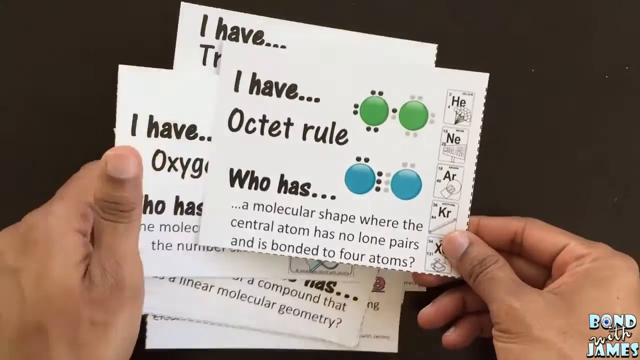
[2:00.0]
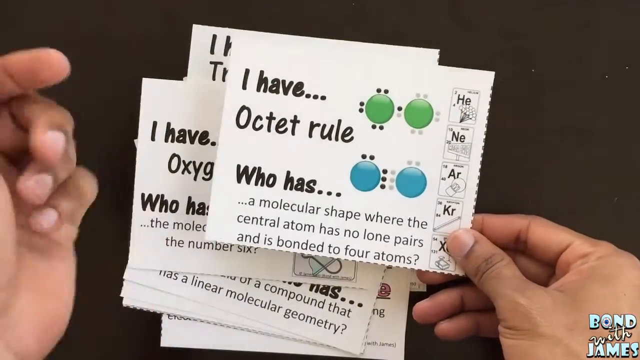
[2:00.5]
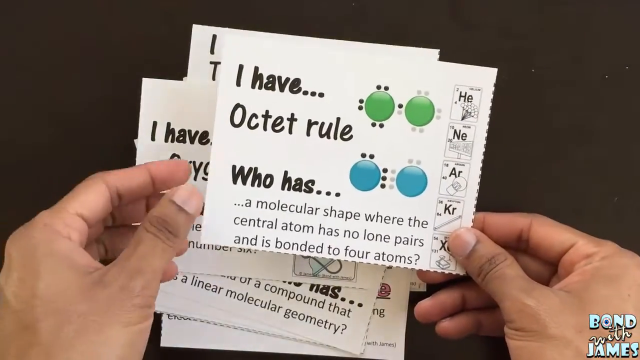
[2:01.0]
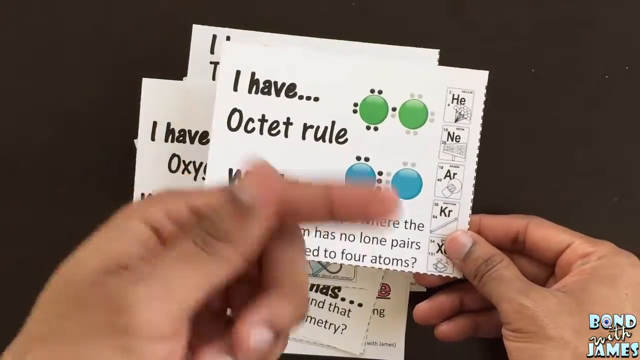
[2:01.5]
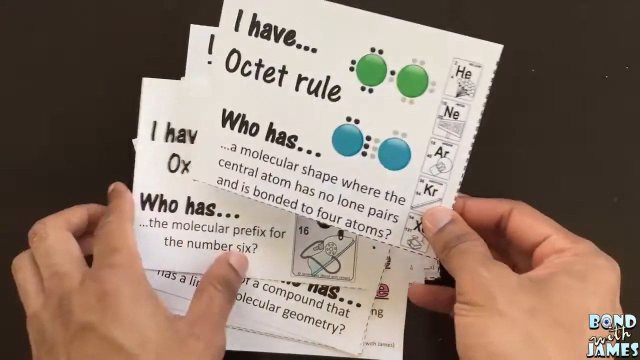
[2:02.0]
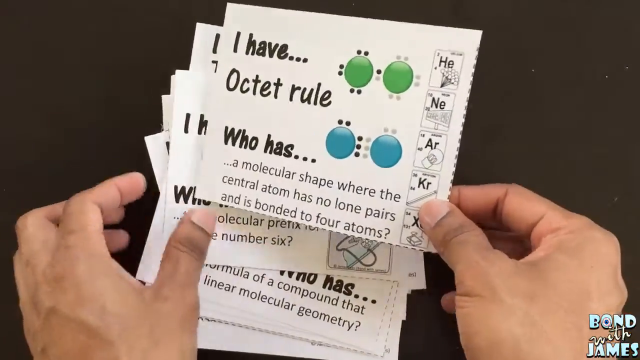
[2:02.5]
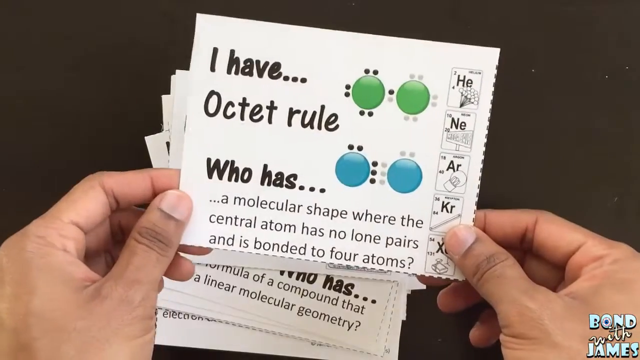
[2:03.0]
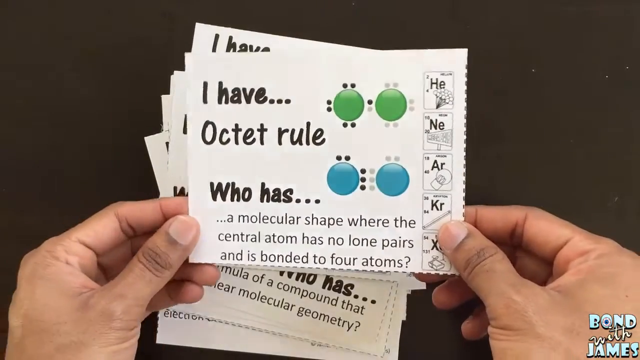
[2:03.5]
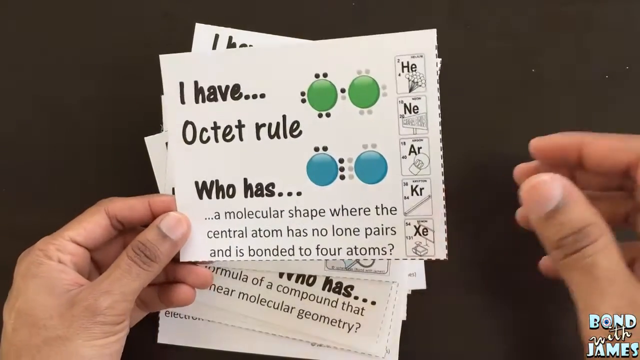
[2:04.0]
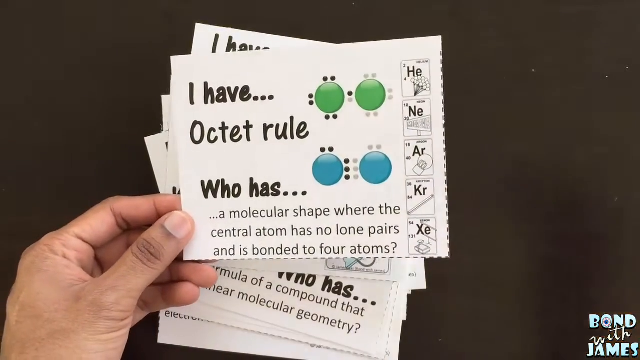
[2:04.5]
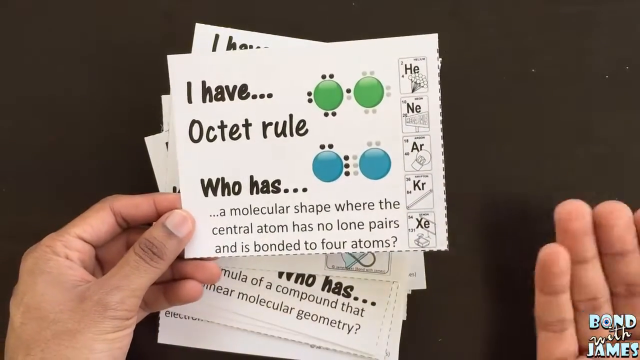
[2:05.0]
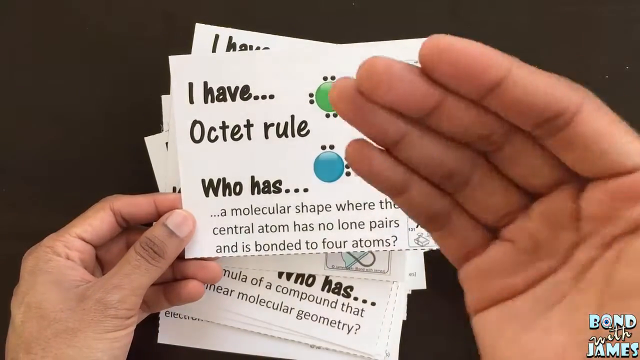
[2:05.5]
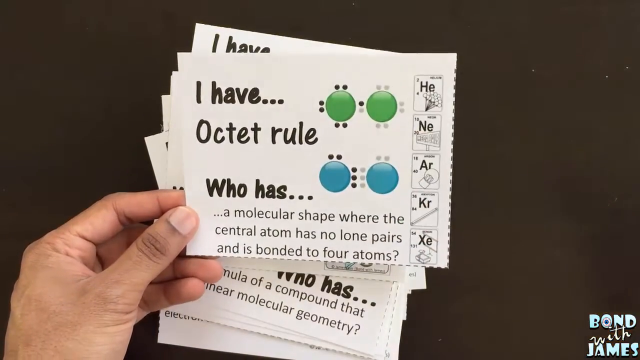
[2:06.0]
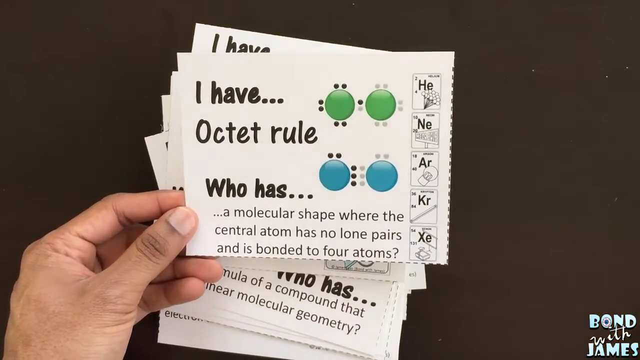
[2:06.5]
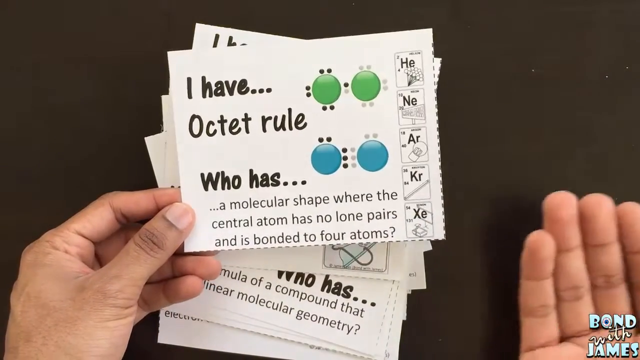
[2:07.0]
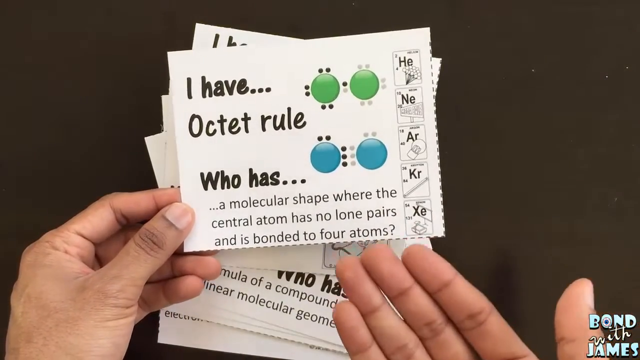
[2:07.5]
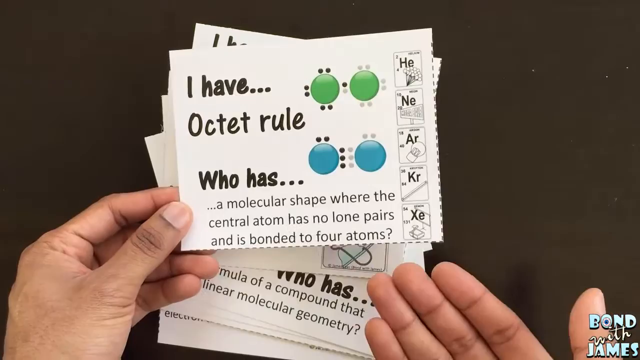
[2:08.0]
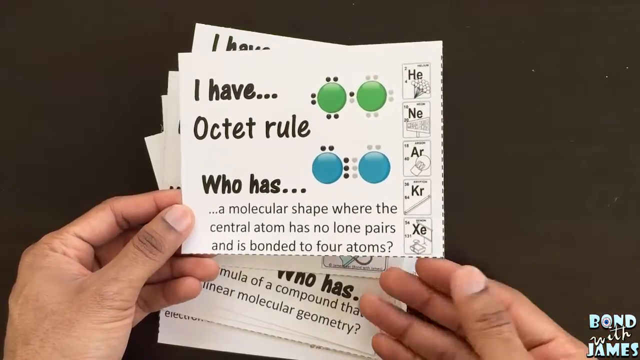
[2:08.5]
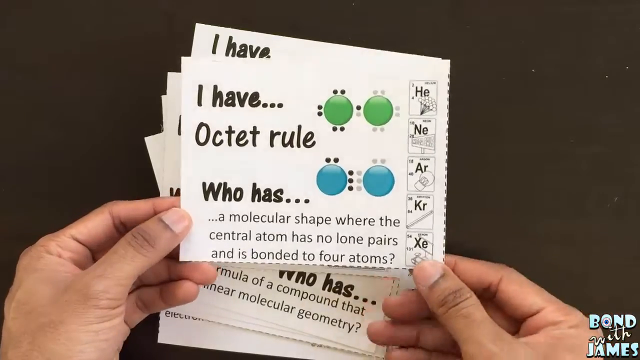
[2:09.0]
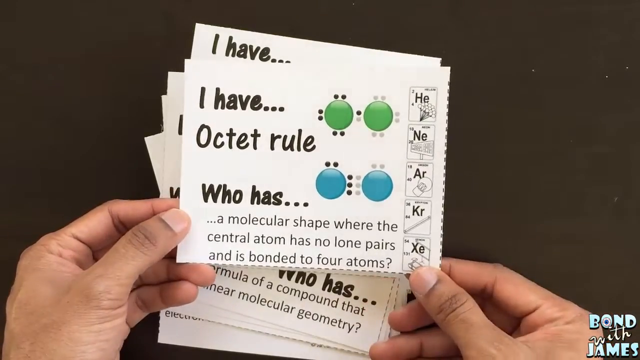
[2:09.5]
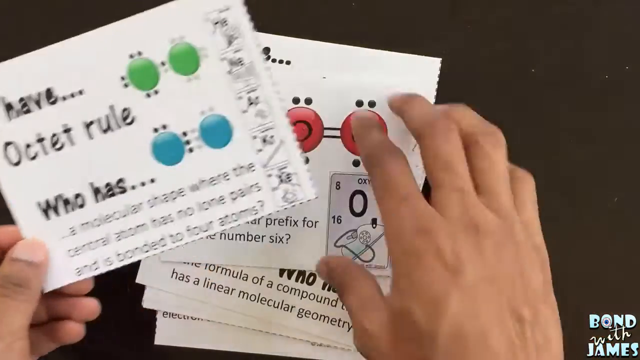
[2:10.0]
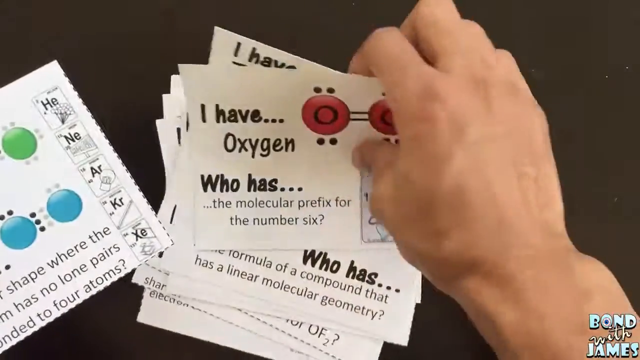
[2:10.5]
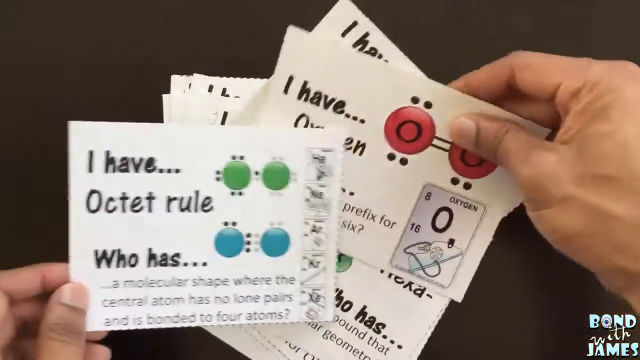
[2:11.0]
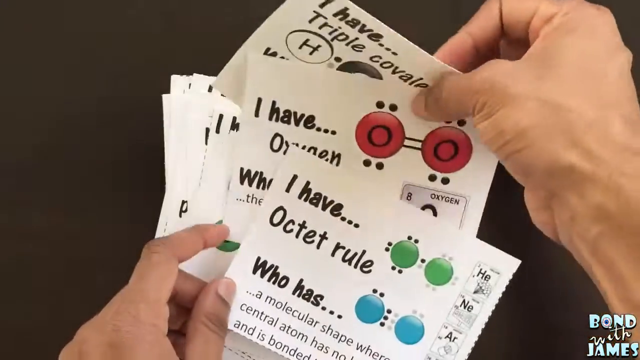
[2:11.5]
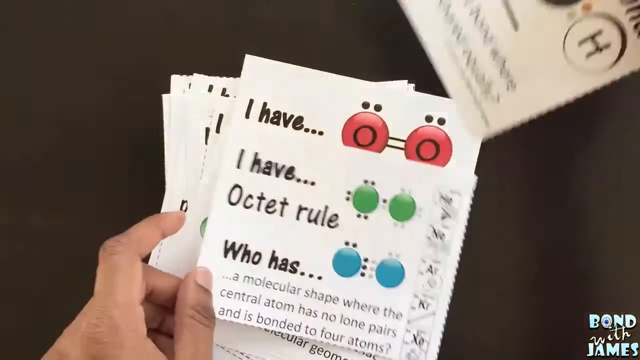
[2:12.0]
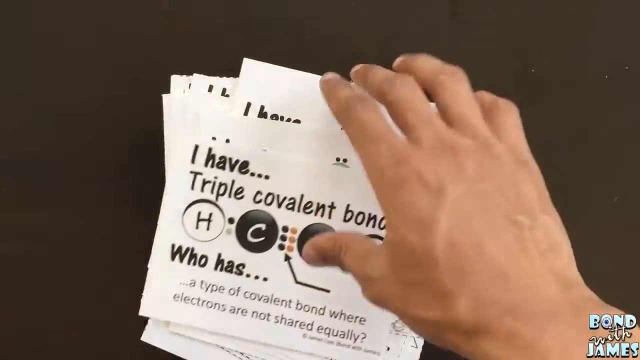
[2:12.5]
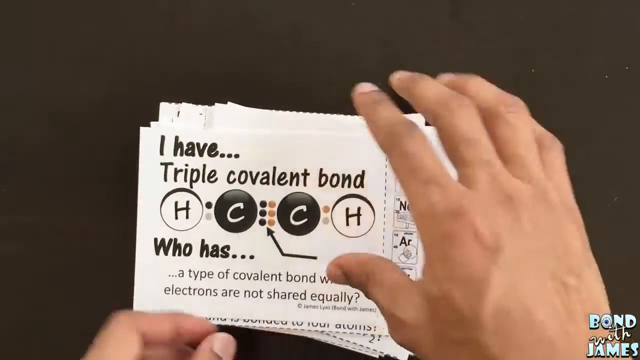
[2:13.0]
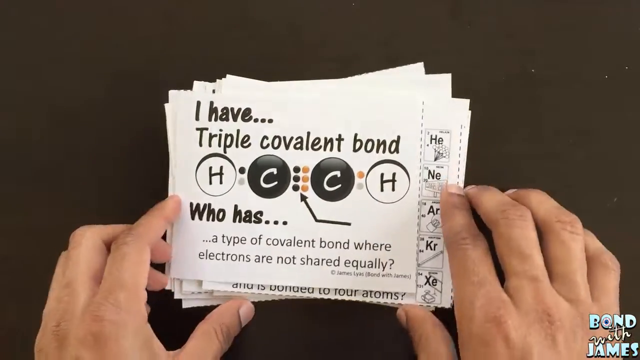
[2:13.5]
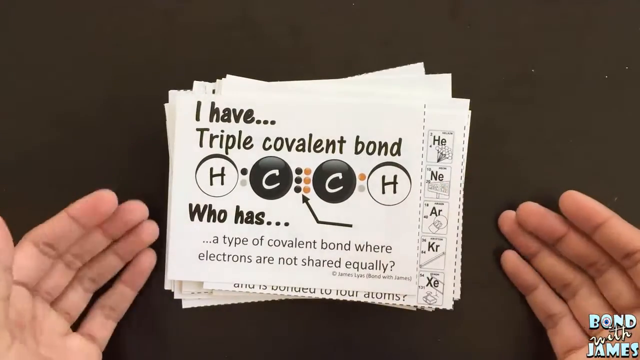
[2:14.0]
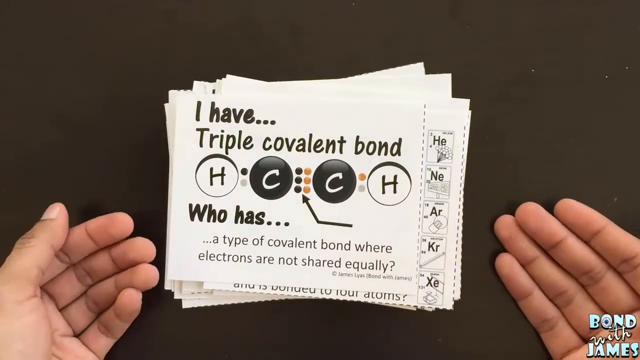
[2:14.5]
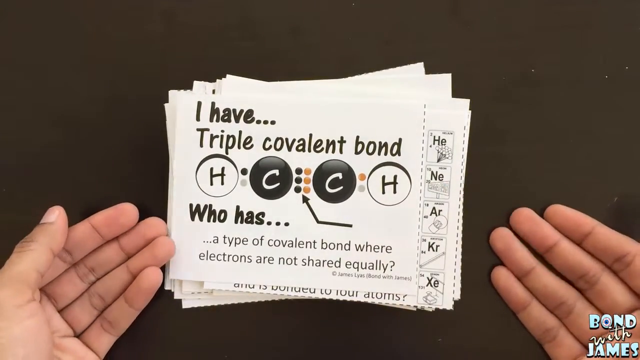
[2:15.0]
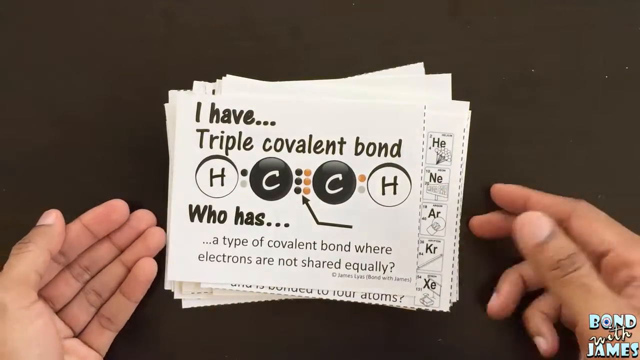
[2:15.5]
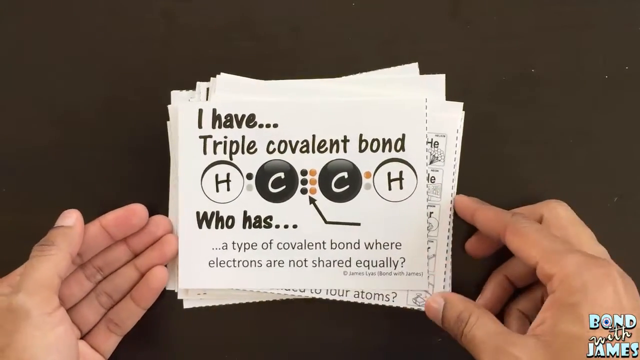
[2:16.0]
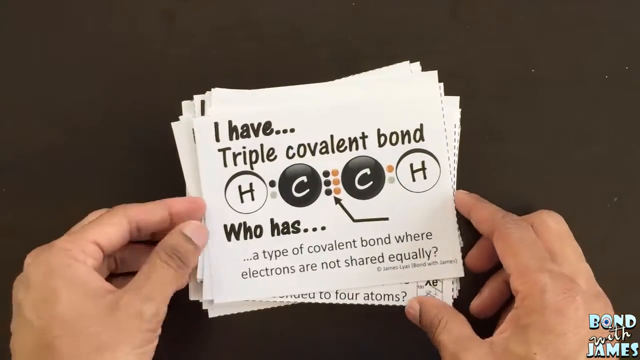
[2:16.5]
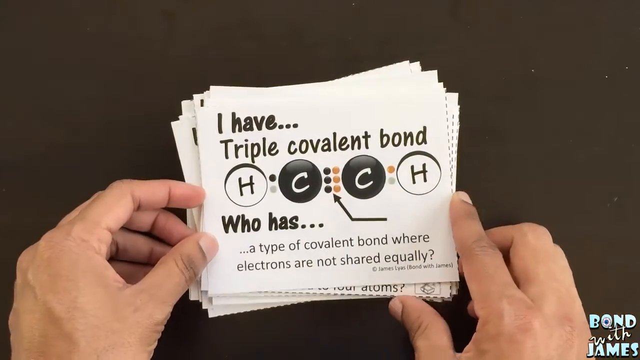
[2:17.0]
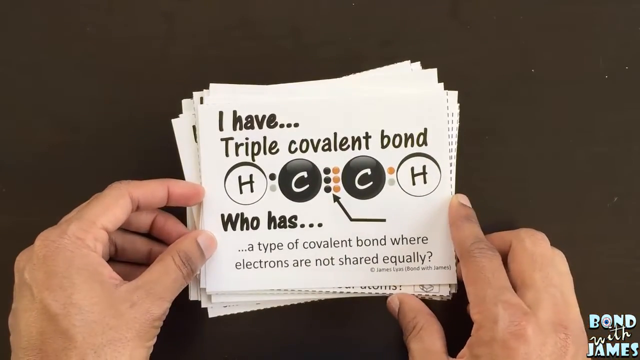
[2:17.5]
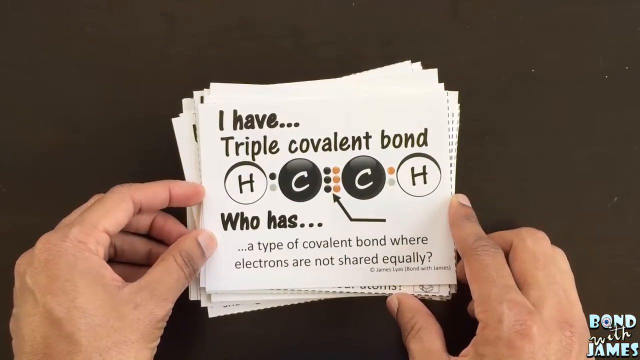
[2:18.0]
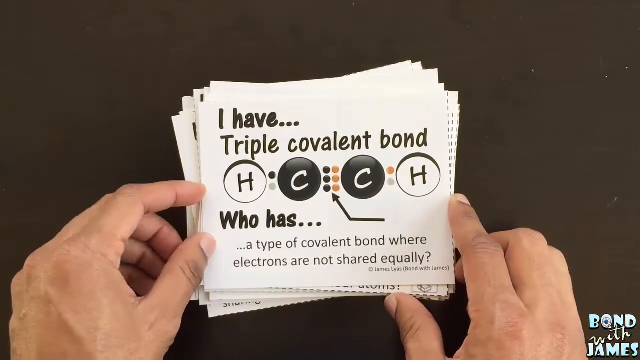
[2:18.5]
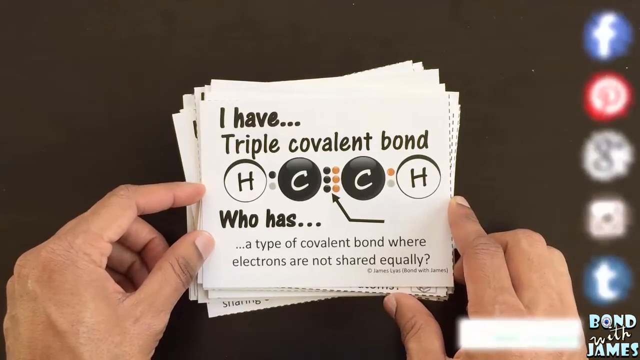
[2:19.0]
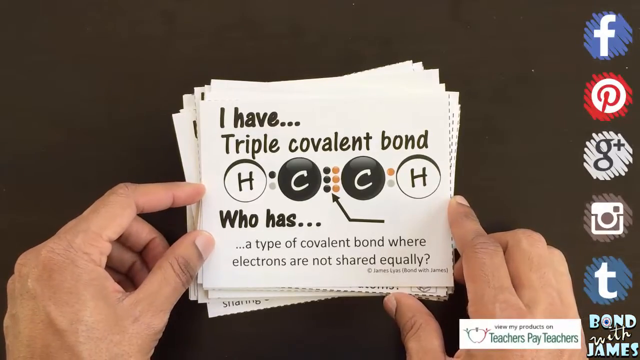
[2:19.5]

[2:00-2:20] A hand firmly holds the "I have octet rule" card, which reads "who has a molecular shape where the central atom has no lone pairs and is bonded to four atoms." Beside that are the letters HE, NE, AR, KR and X, with the person's hand covering the second letter beside X. The right hand holds the second card, "I have oxygen," which asks for the molecular prefix for the number six. The person makes gestures with the right hand, probably talking. They then pick another card that reads "I have triple covalent bond." It shows circles with the letters H, C, C and H, with white and black backgrounds, and three dots, one black and the others looking orange. Below is written "who has a type of covalent bond where electrons are not shared equally."